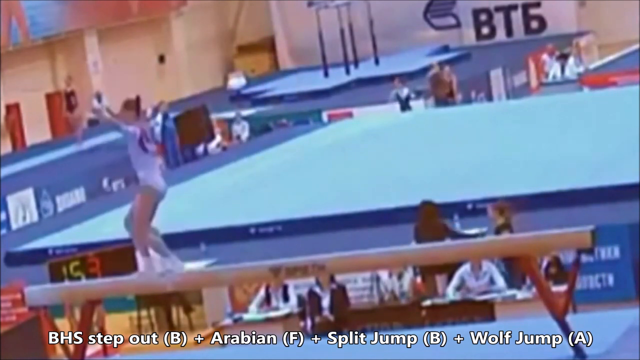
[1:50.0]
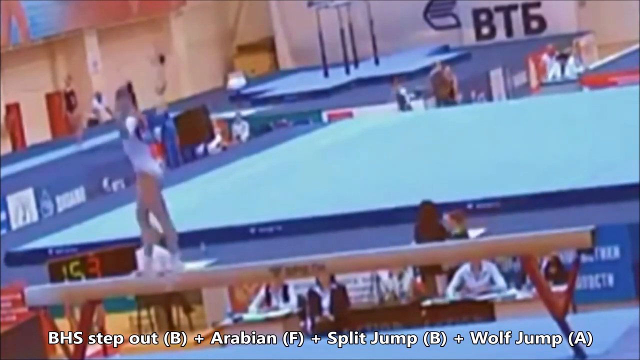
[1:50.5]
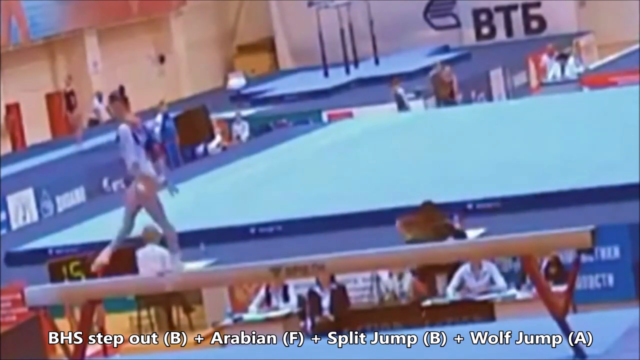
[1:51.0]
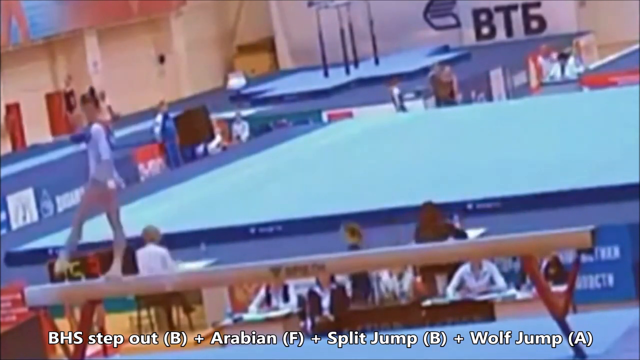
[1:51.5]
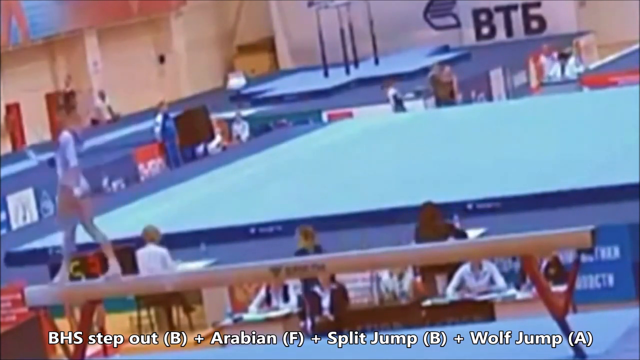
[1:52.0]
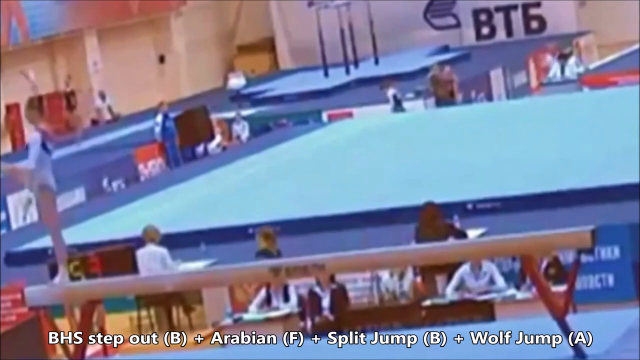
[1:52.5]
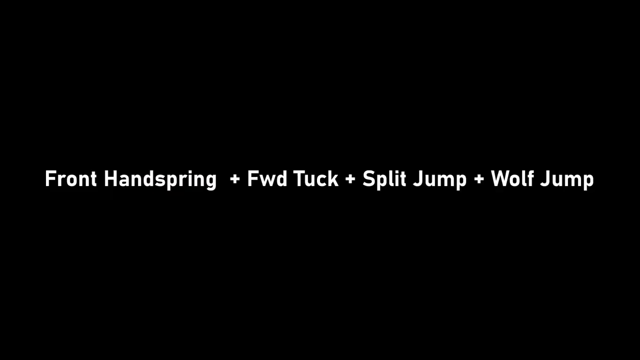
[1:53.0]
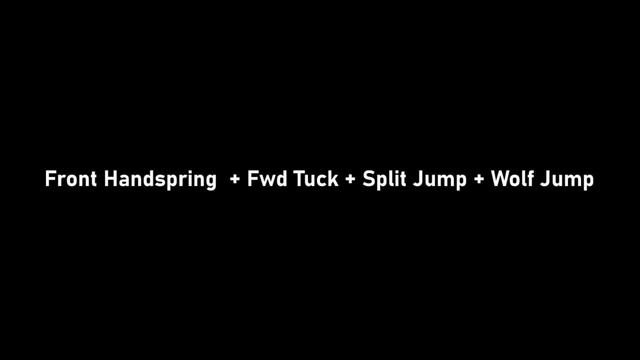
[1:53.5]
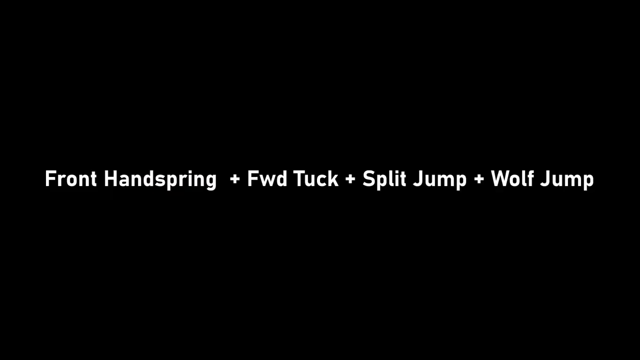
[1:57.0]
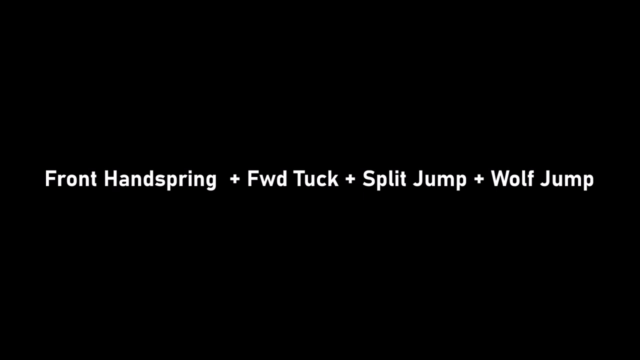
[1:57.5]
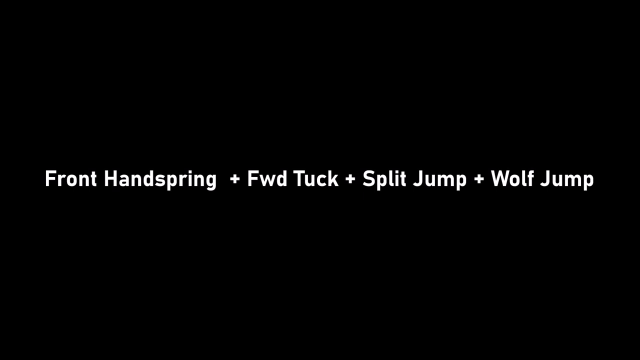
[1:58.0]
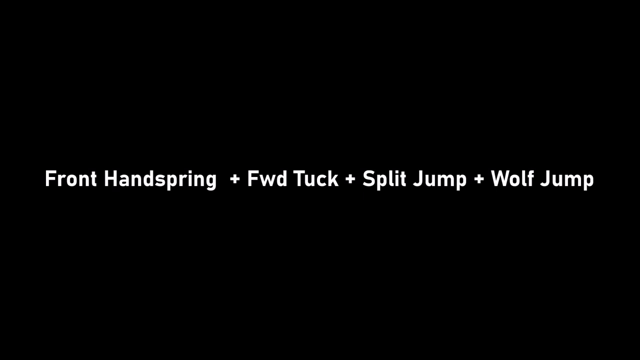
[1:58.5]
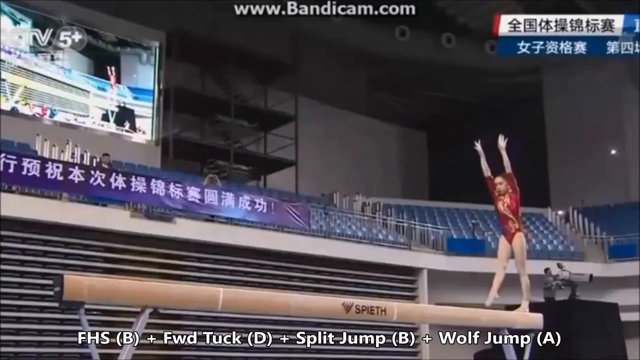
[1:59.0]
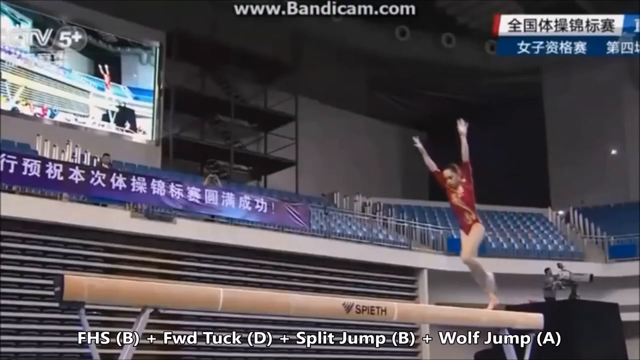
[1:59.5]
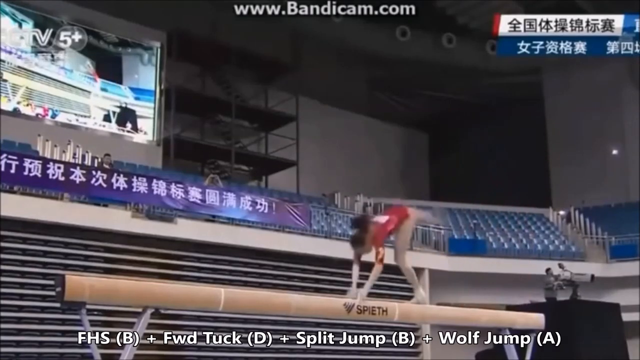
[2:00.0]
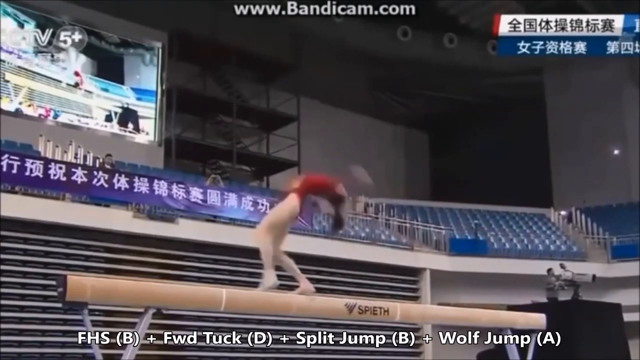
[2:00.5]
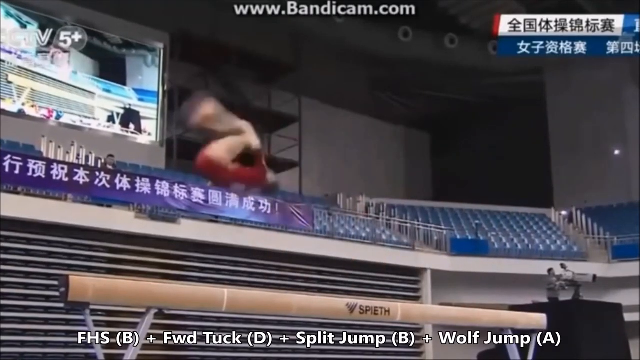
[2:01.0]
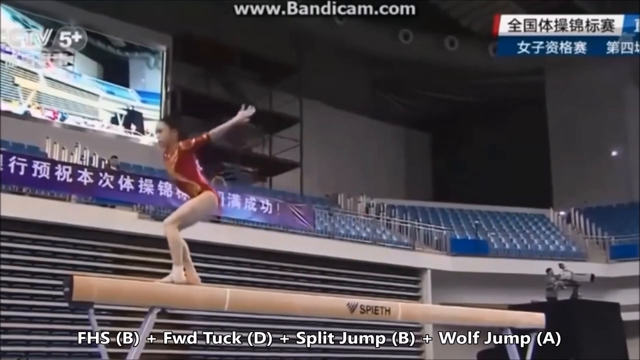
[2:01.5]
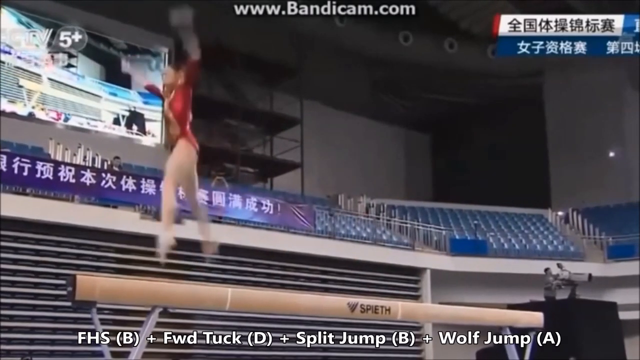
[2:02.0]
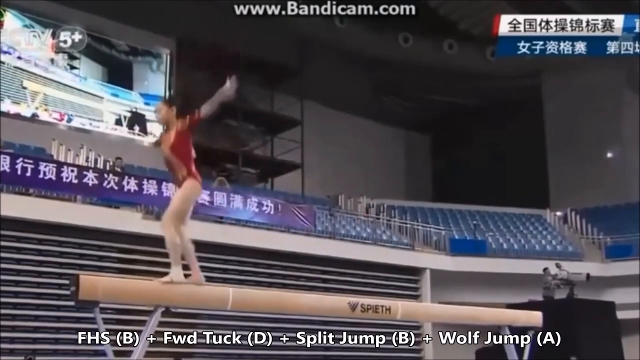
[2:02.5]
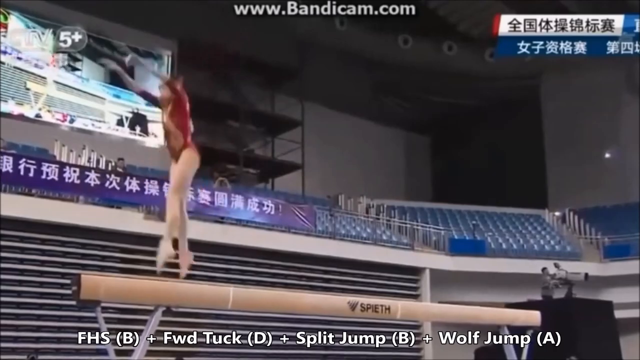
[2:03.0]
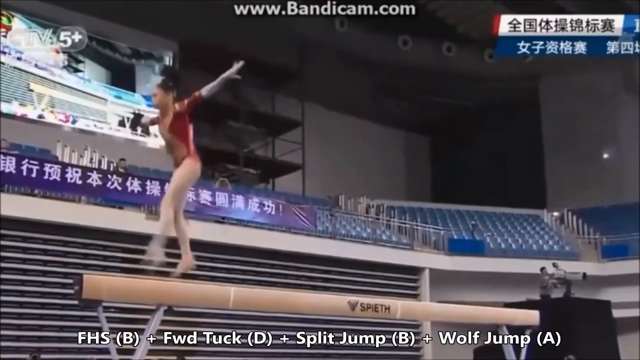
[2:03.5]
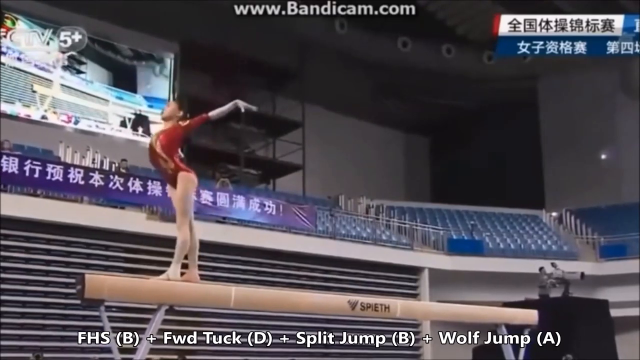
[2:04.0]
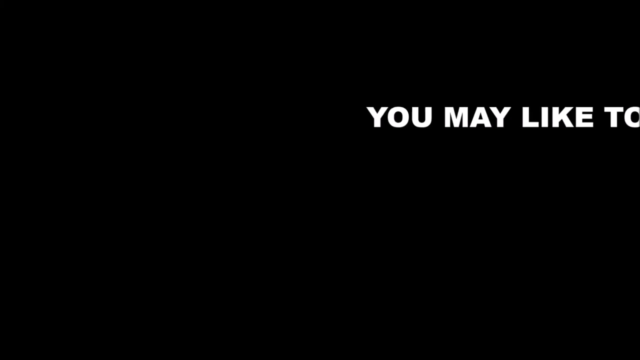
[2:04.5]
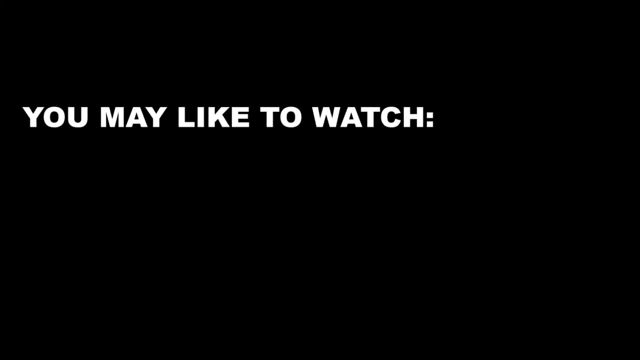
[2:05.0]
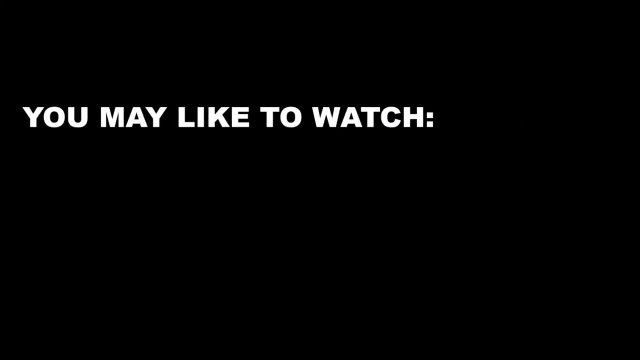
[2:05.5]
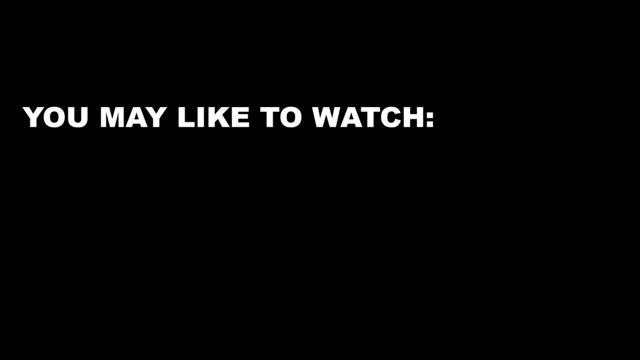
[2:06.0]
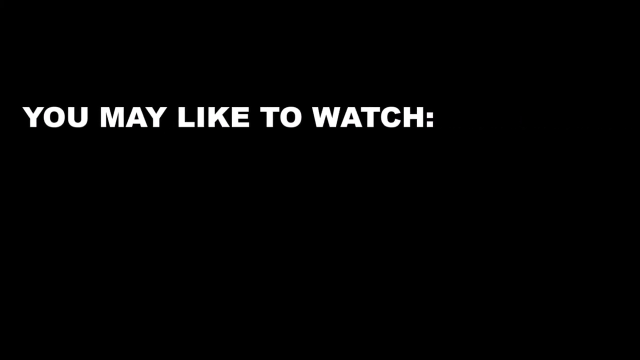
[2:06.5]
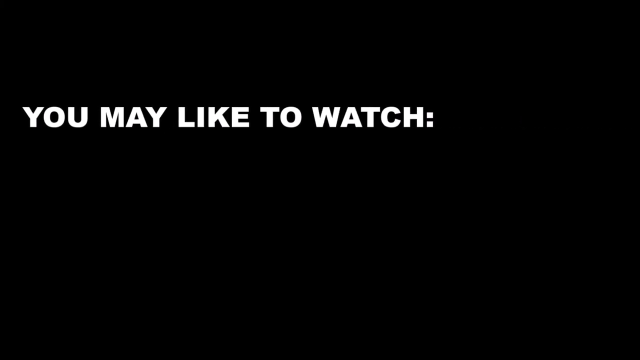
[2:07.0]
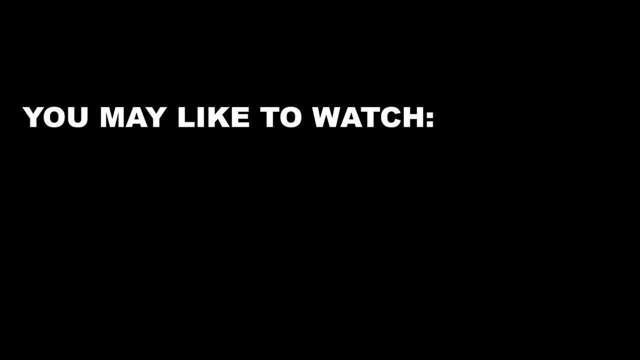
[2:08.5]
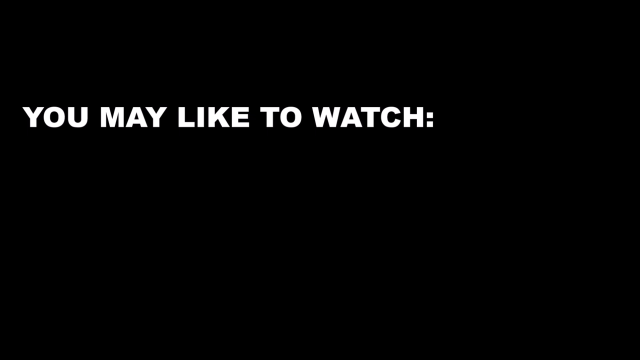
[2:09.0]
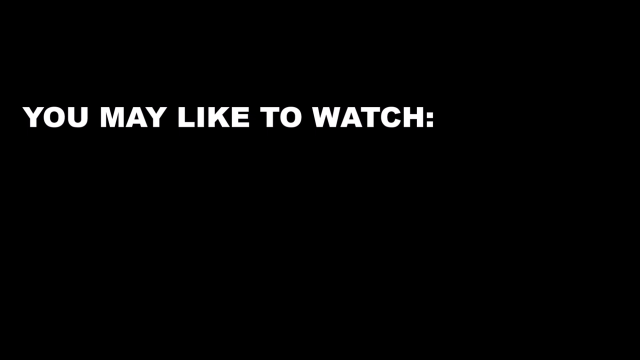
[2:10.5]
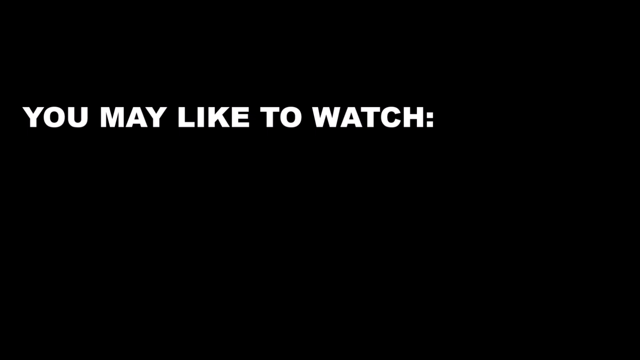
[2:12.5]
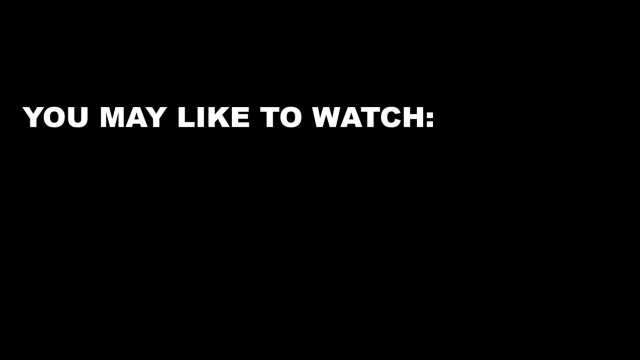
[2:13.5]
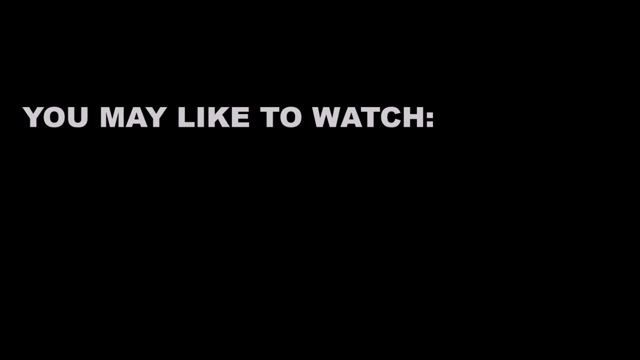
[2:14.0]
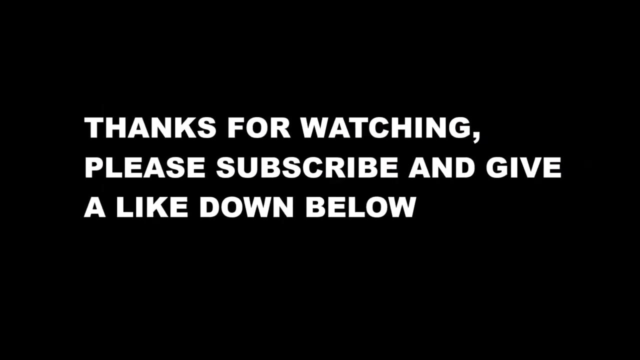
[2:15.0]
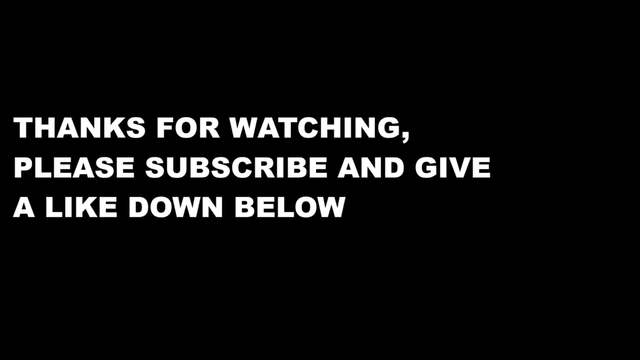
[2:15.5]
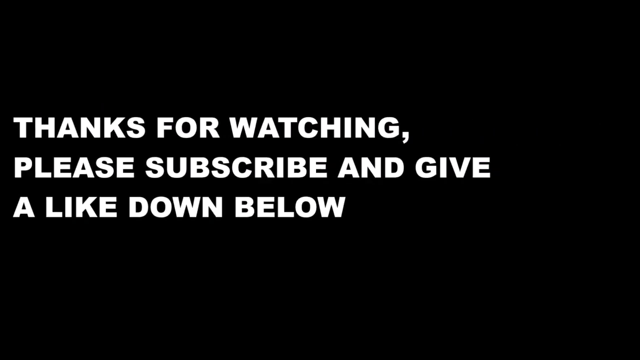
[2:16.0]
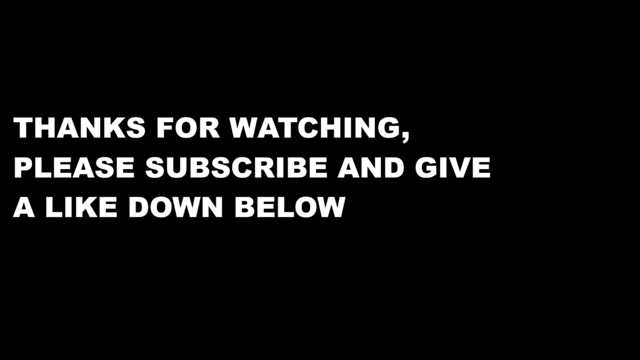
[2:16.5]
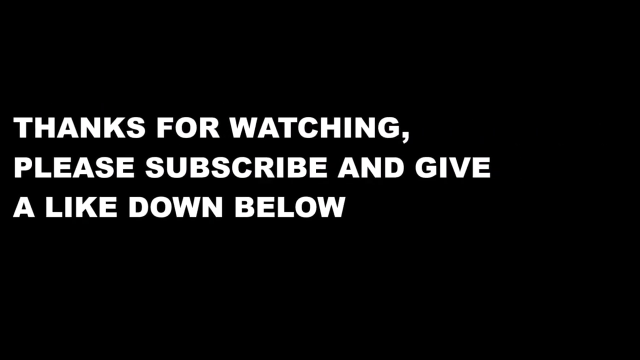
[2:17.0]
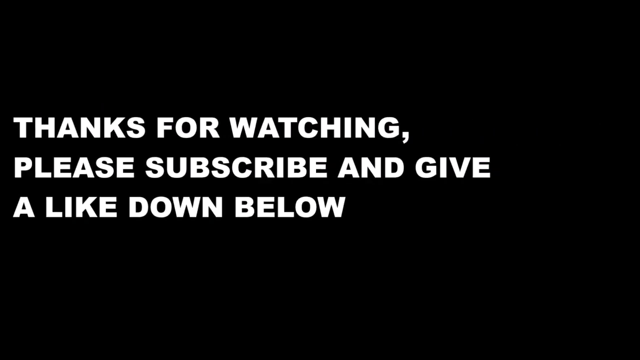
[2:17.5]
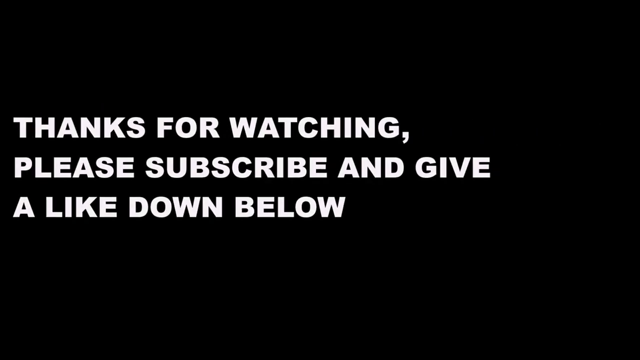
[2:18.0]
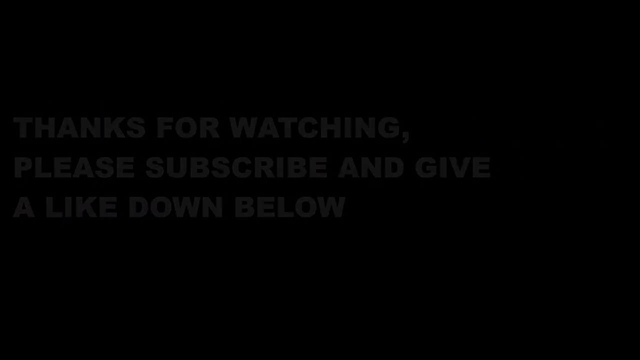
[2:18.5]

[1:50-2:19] A gymnast wears a leotard that is mostly white with other colors such as red and maybe a little blue. The footage seems a little dated, maybe from the early 2000s or late 90s. She is on the beam, pointing her left toe, then her right toe. Then text reads "front handspring + FWD + split jump + wolf jump" and stays up for a few seconds. Next someone is shown with words in an Asian language, and she appears to have a red leotard, maybe with a dragon. Then text reads "you may like to watch" and "Thanks for watching. Please subscribe and give a like down below".